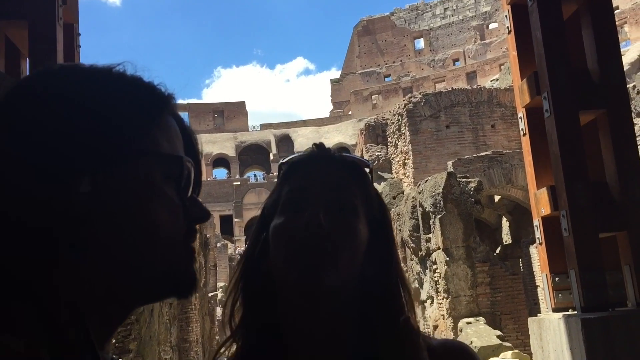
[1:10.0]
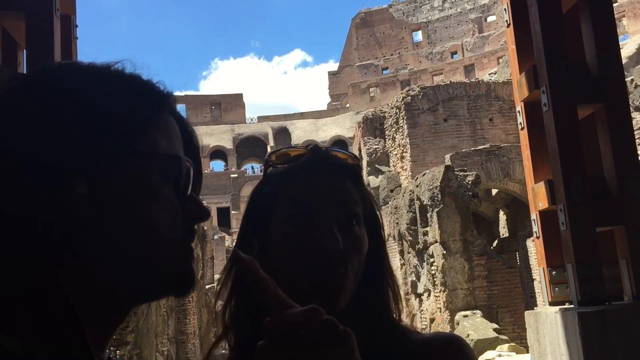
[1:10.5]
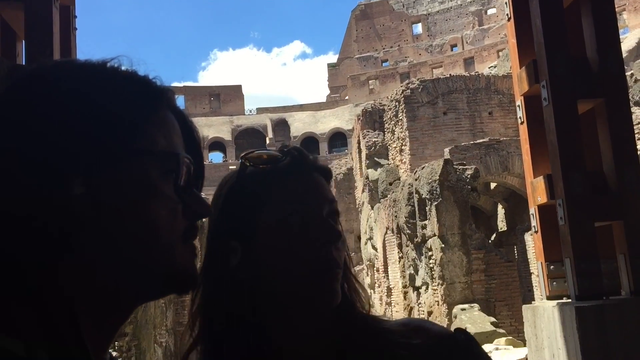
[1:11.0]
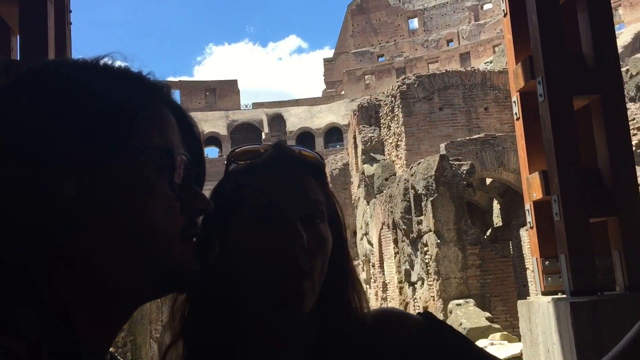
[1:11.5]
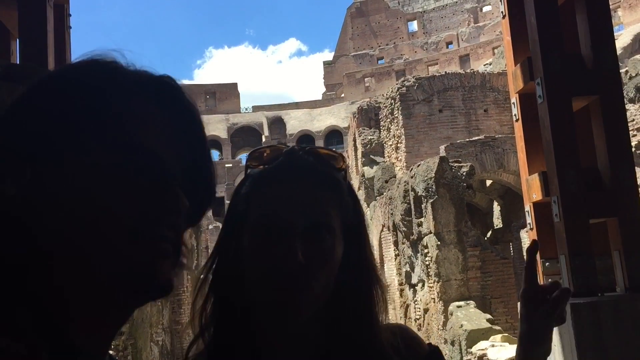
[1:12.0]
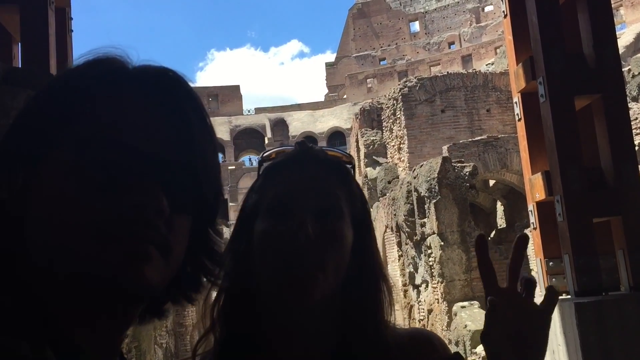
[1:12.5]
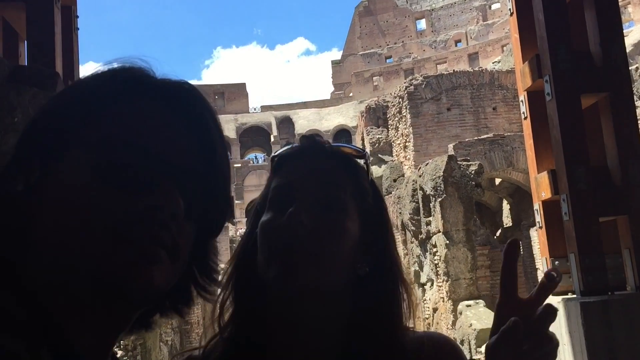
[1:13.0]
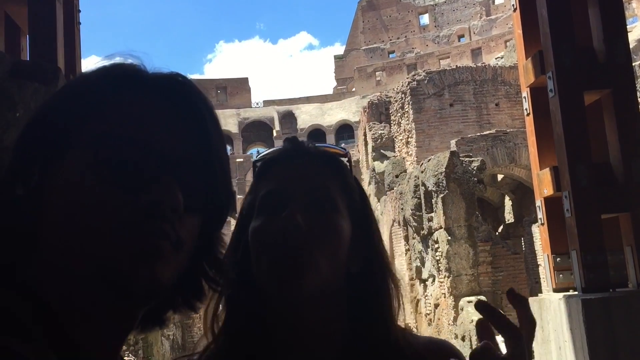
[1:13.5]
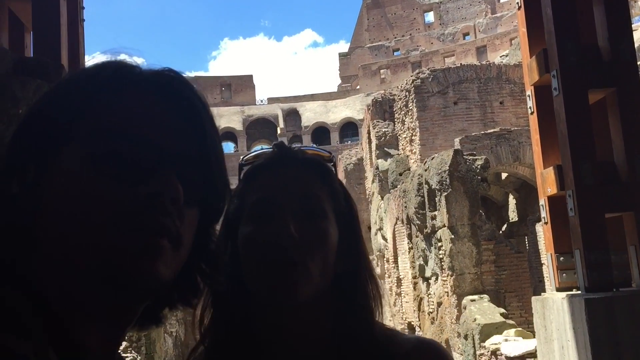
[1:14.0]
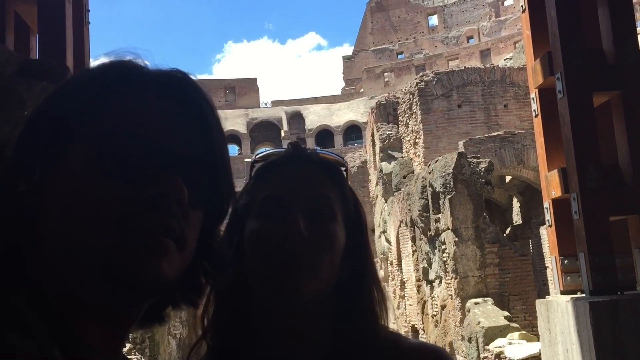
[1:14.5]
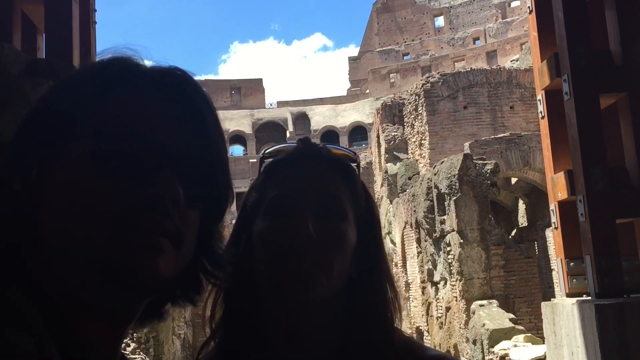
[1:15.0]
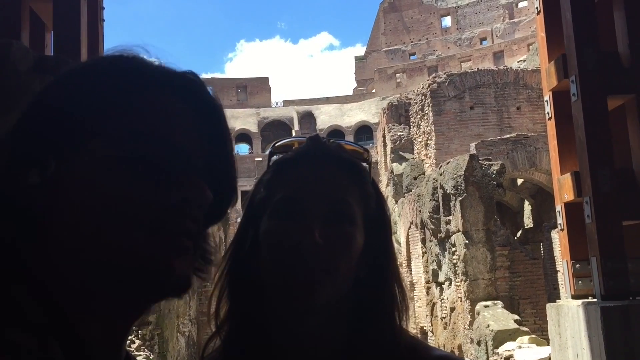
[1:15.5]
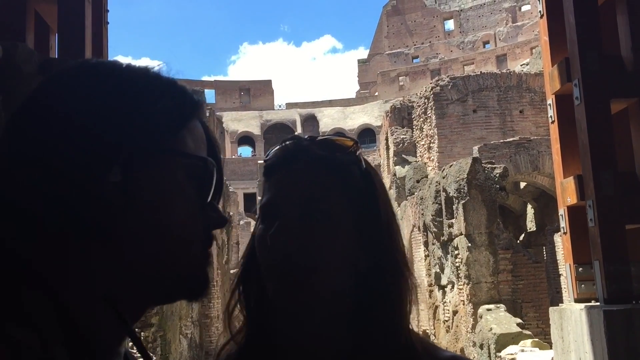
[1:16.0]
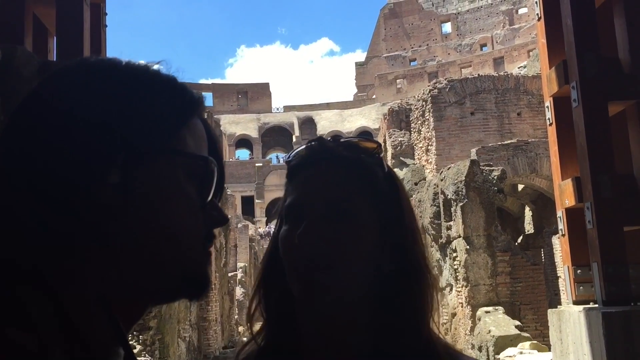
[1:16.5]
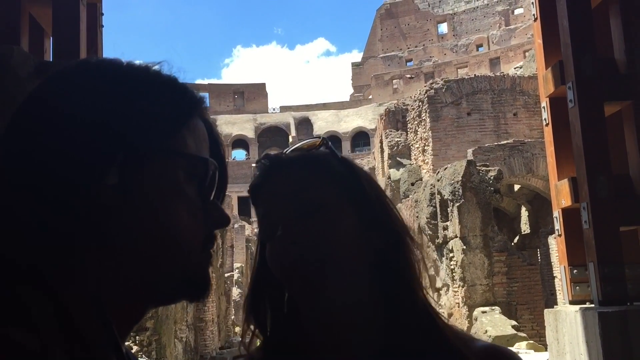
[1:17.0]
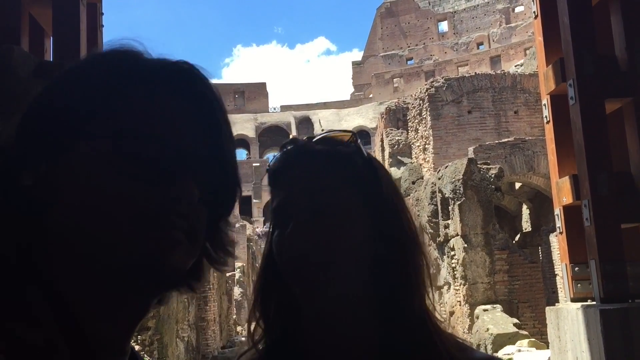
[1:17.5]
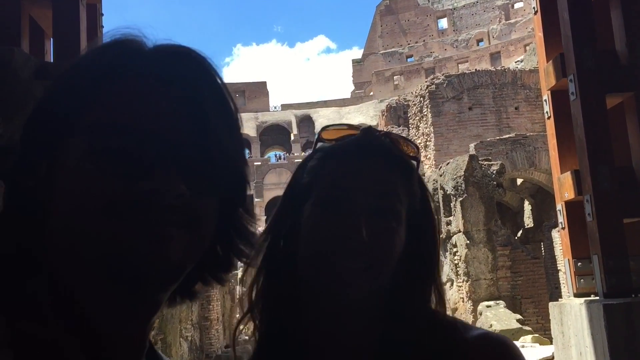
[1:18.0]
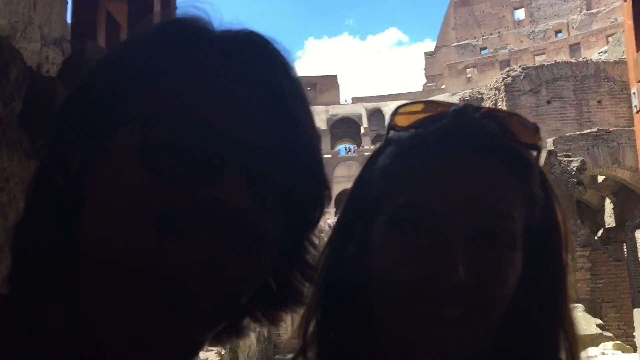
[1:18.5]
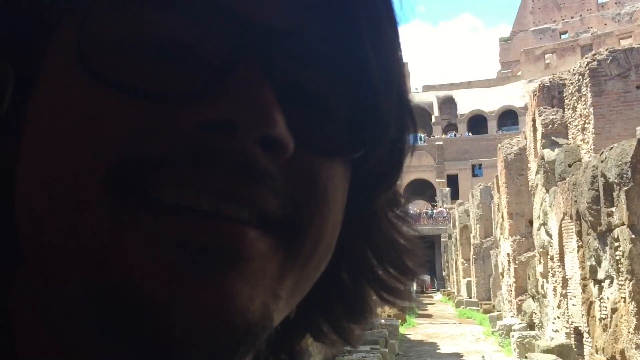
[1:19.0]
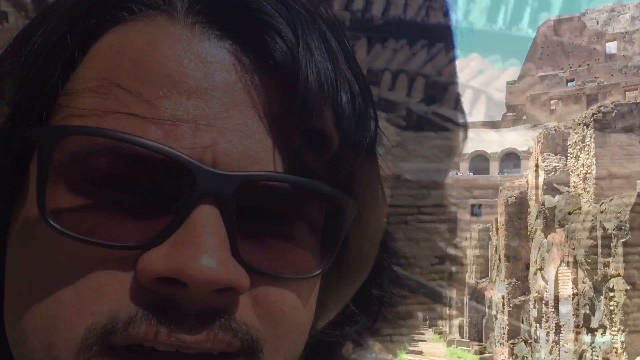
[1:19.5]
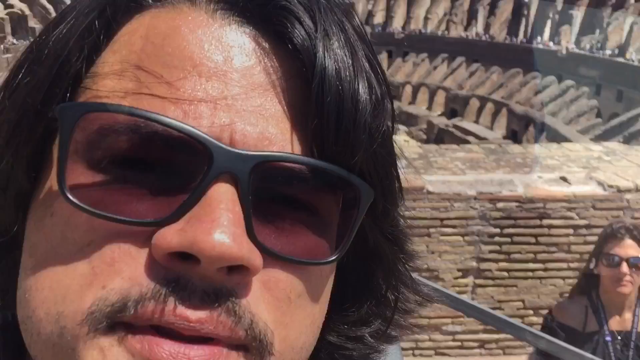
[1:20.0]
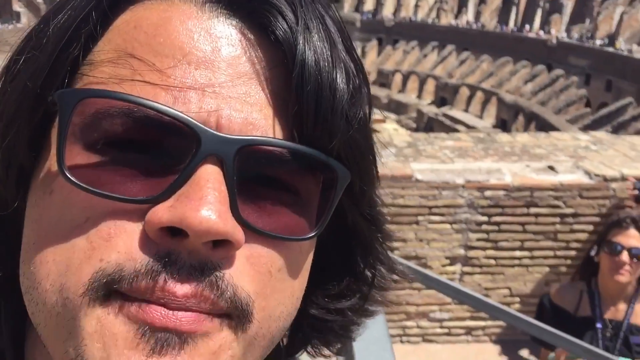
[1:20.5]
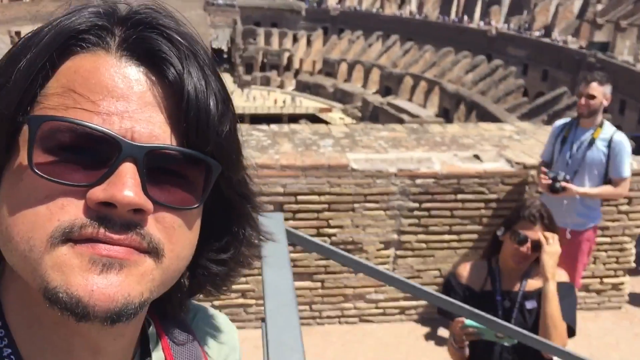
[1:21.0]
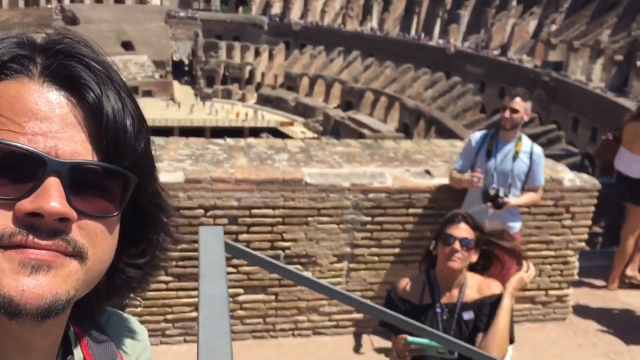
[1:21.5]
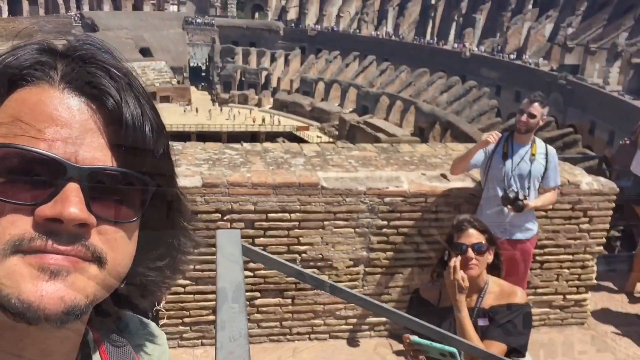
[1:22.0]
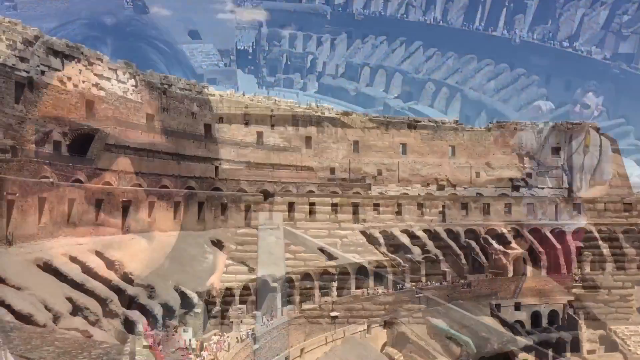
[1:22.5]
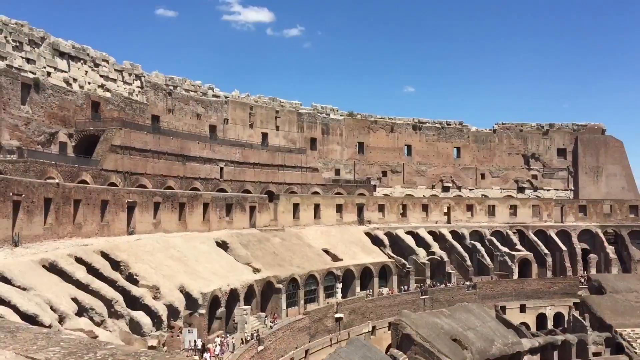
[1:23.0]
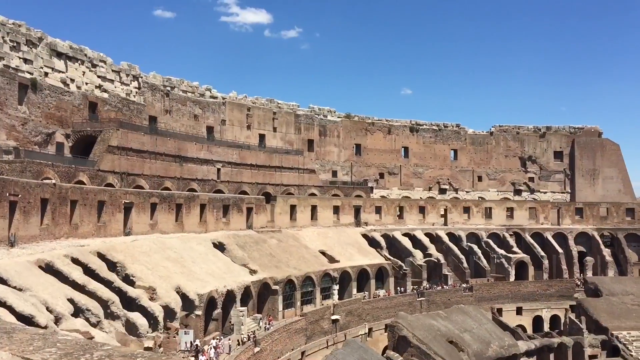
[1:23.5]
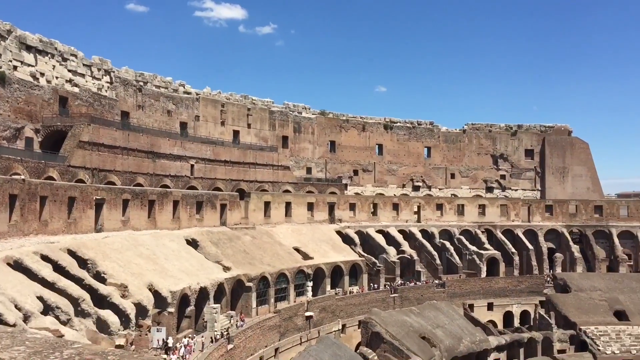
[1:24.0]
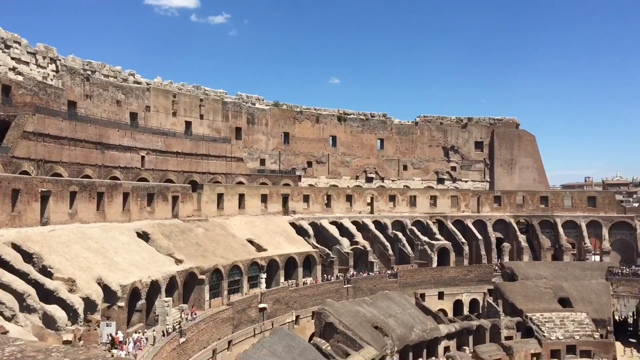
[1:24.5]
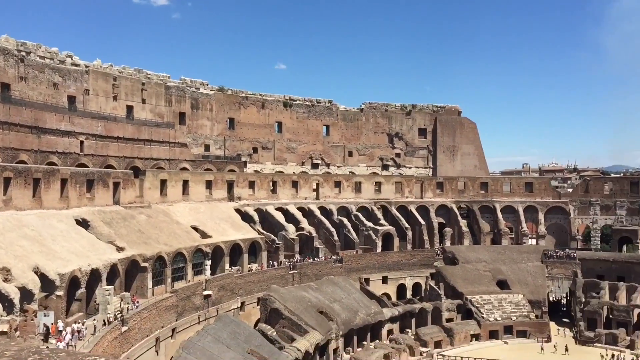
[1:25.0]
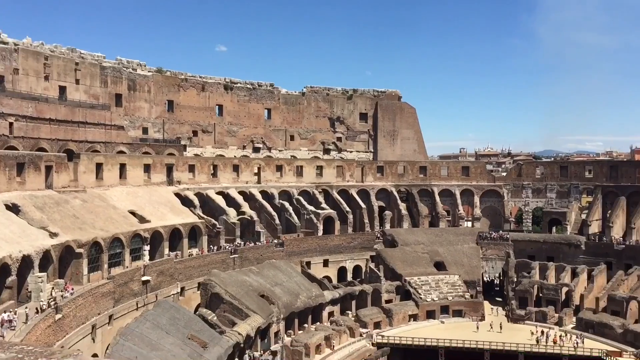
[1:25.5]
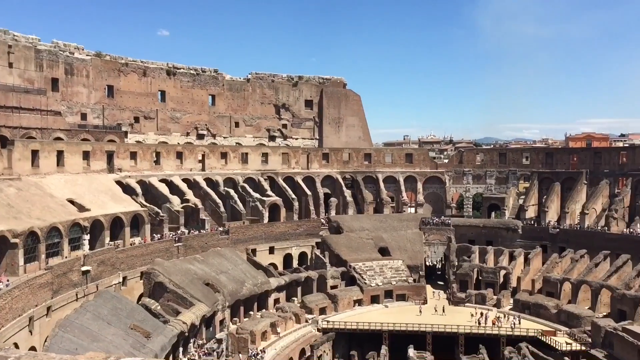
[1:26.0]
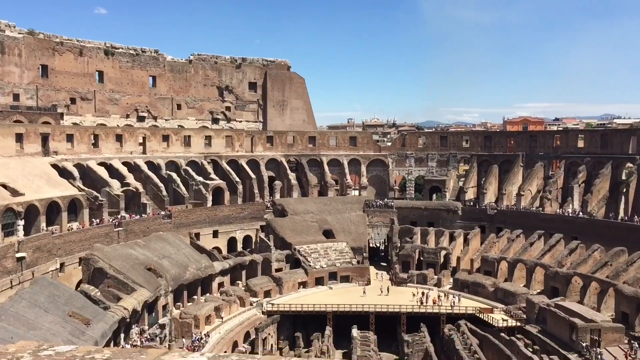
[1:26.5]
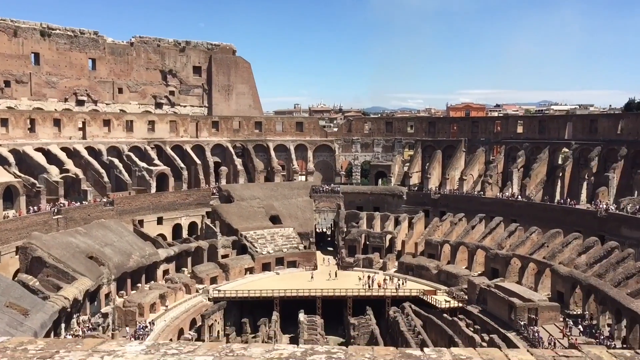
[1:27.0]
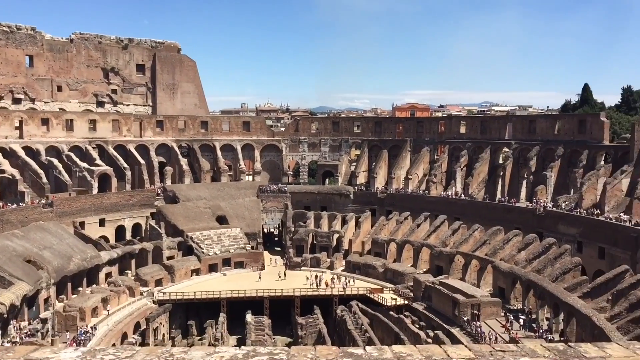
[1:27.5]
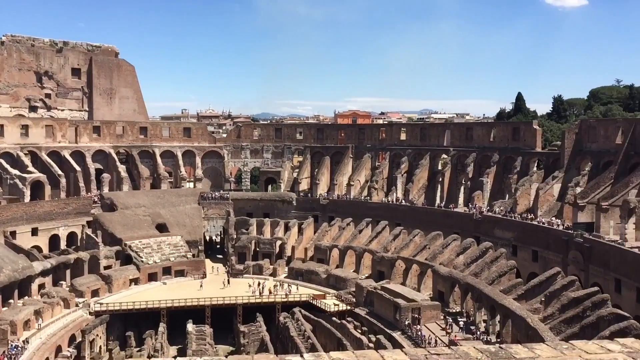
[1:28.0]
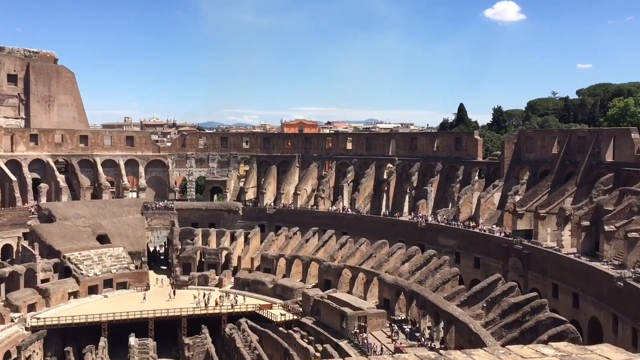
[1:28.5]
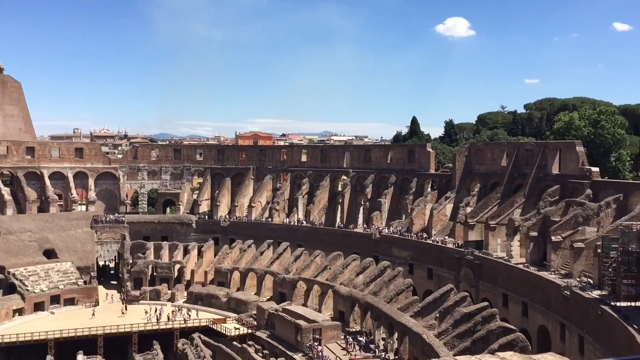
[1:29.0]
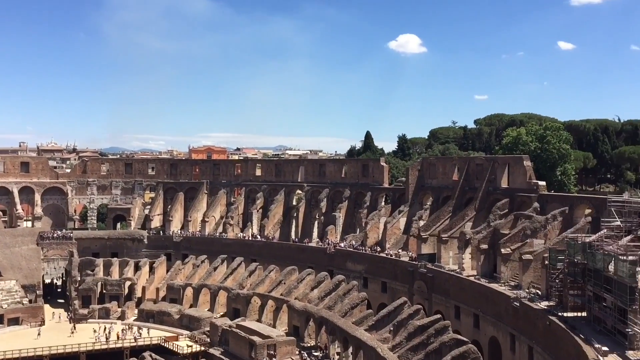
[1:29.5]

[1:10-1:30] Inside the Roman Colosseum, a man and a woman, their faces slightly obscured by shadows, stand on the ground of the Colosseum, surrounded by stone walls and what look like metal supporting pillars used to keep the structure sound. Behind them are the walls of the Colosseum and the sky above. The woman speaks to the camera and gestures, and the man occasionally speaks as well. They turn to look at each other. The camera closes in on his face, and the scene changes to another close-up of his face, this time outside on the top of the Colosseum. He holds up the camera and looks down at the woman from the earlier scene and some additional tourists standing on a lower level. The Colosseum is visible below him, followed by a close-up of the upper walls of the Colosseum taken from a high point inside the structure. The camera pans around to show the entire building.